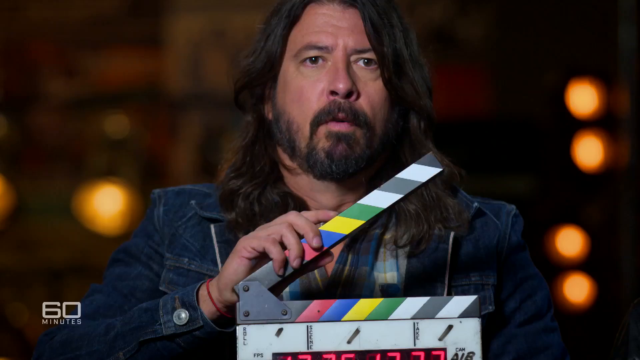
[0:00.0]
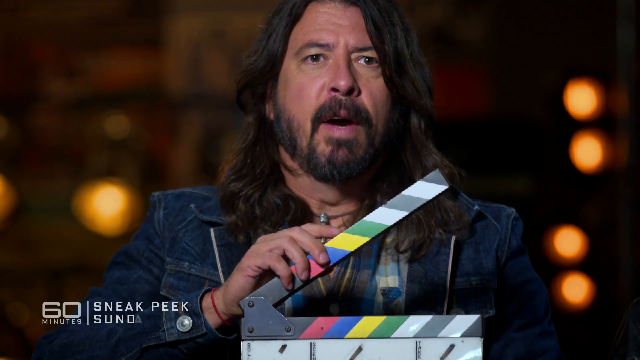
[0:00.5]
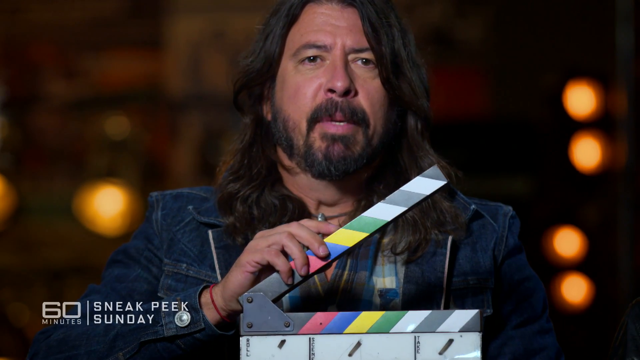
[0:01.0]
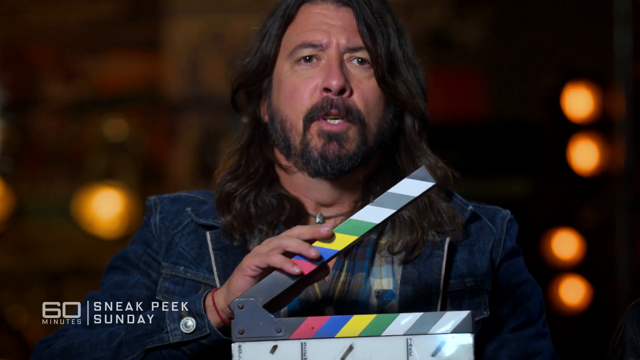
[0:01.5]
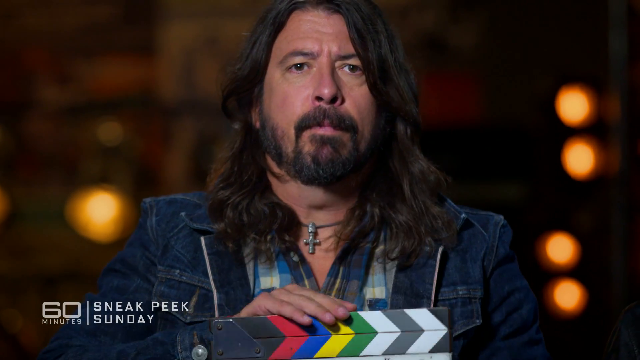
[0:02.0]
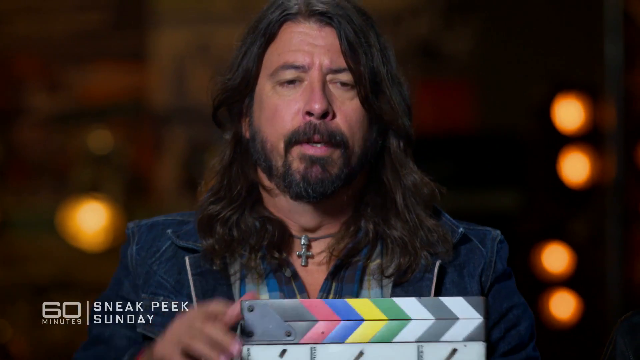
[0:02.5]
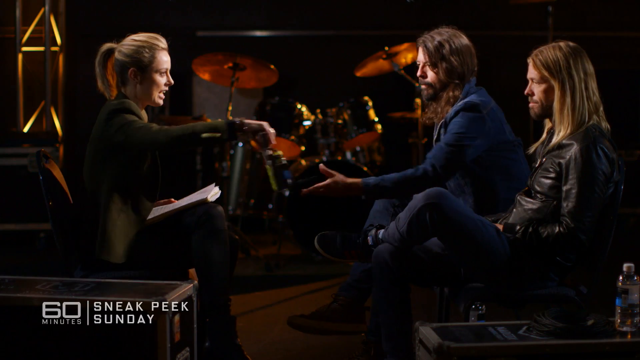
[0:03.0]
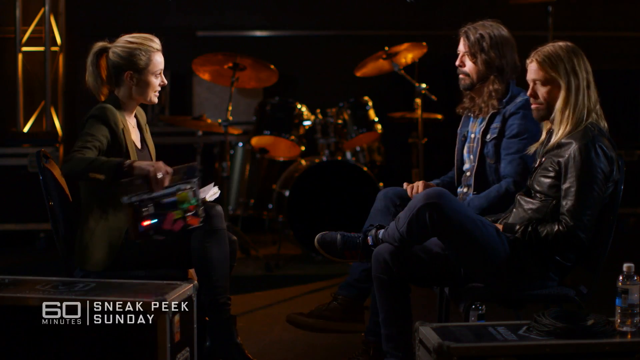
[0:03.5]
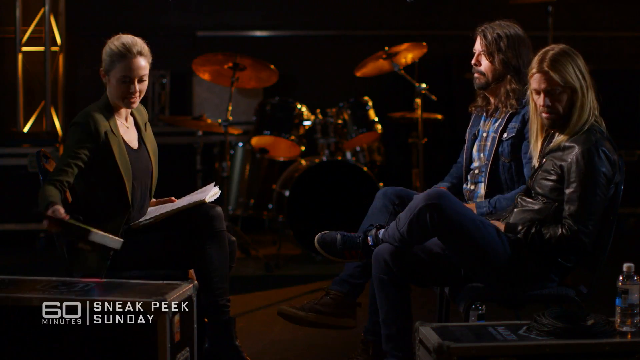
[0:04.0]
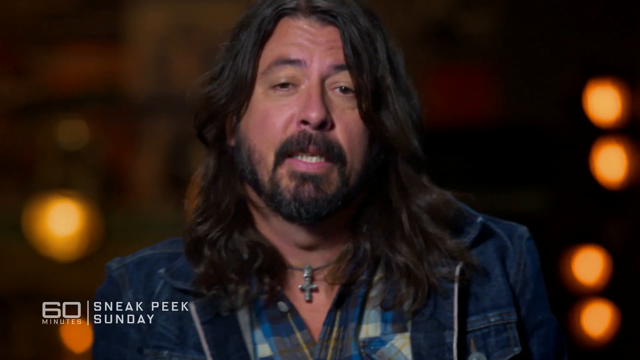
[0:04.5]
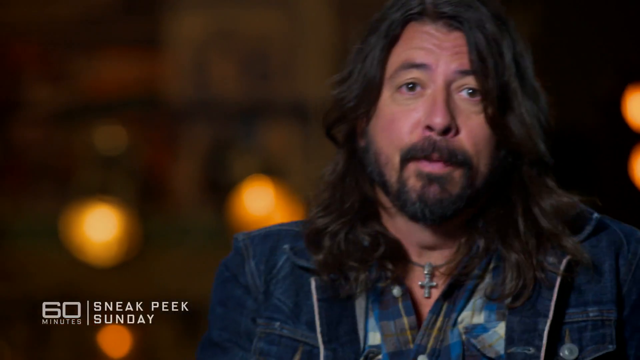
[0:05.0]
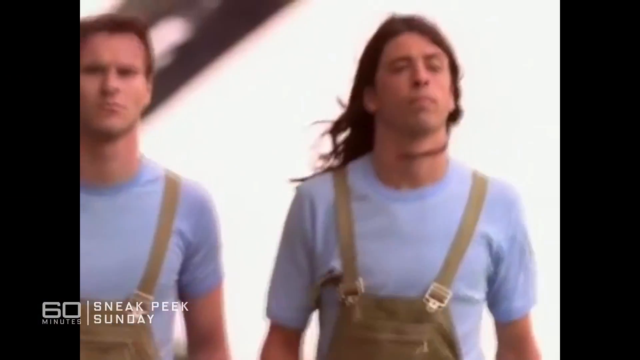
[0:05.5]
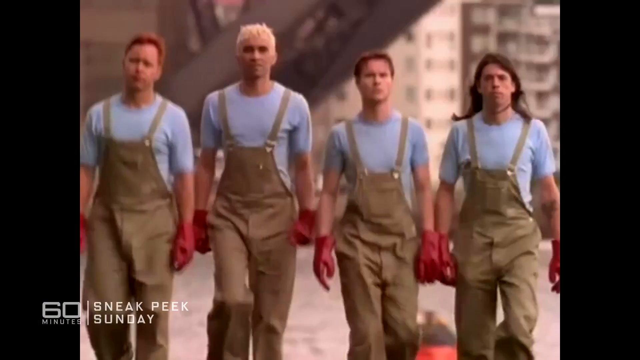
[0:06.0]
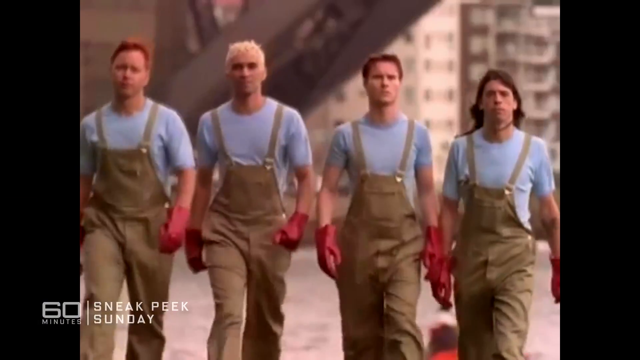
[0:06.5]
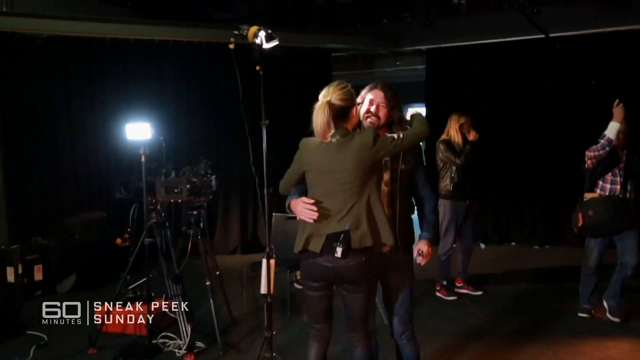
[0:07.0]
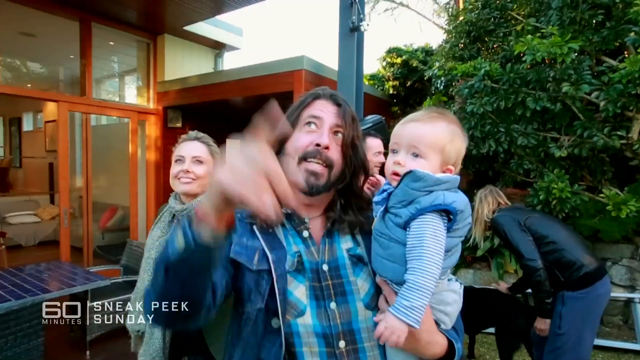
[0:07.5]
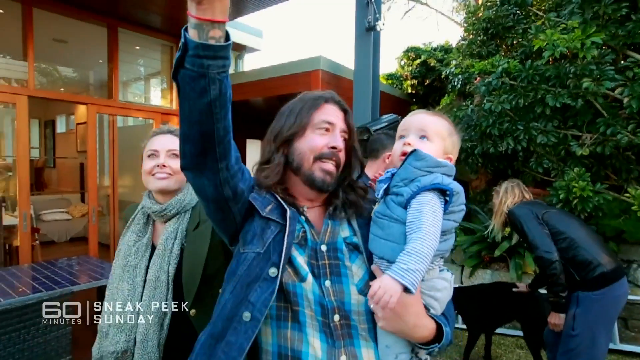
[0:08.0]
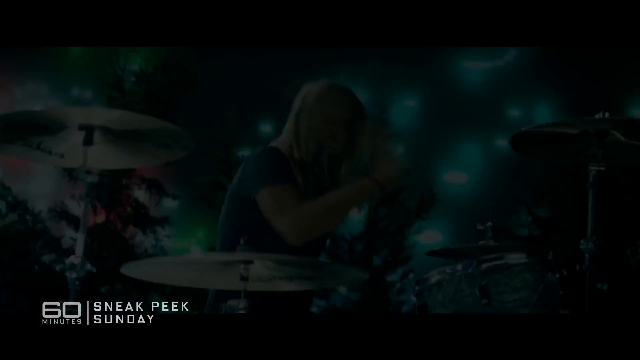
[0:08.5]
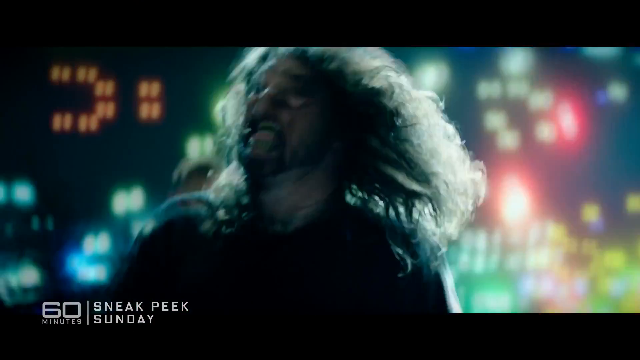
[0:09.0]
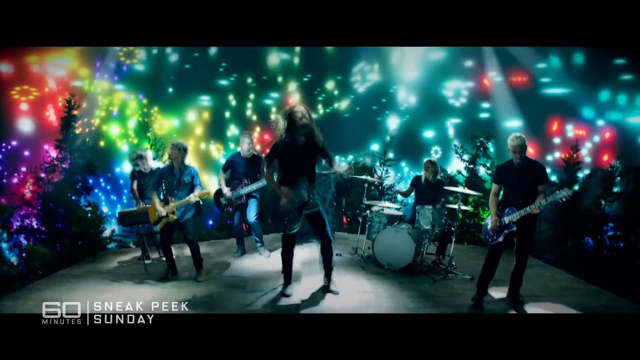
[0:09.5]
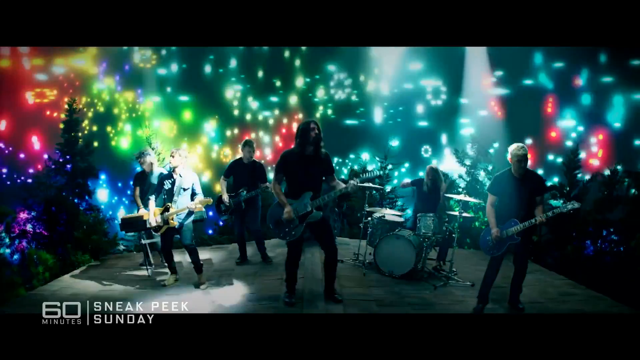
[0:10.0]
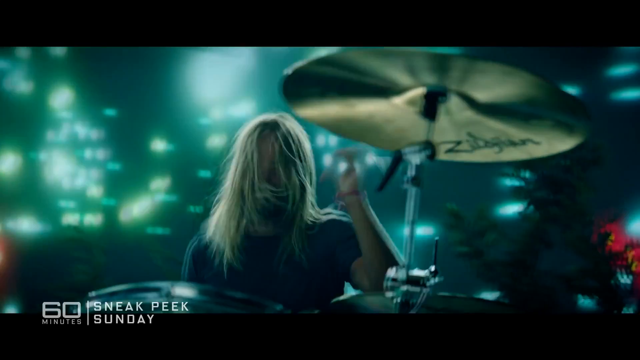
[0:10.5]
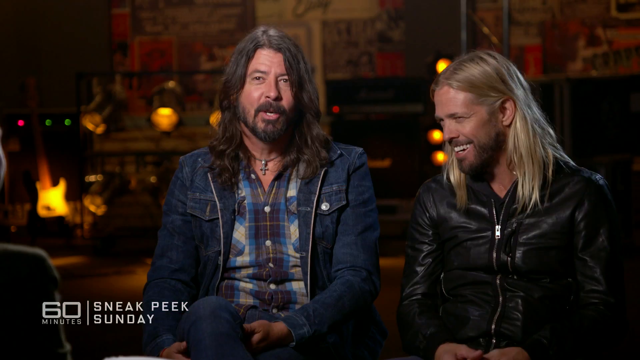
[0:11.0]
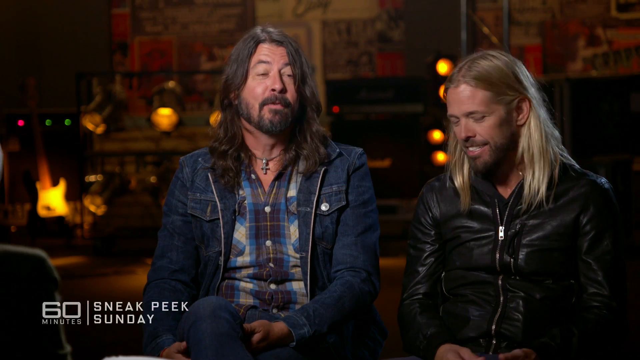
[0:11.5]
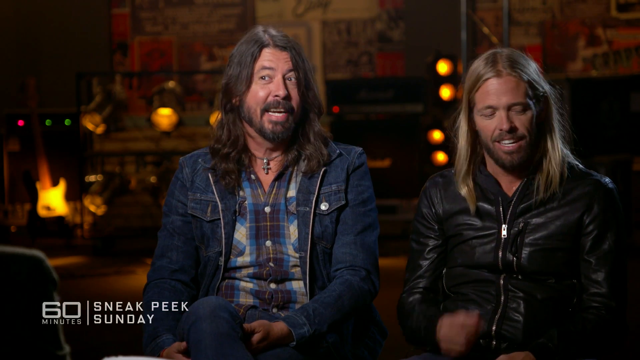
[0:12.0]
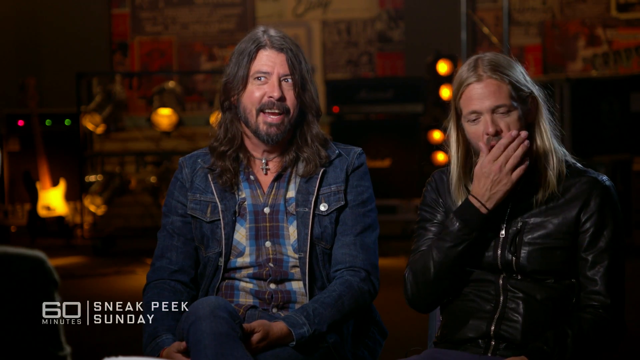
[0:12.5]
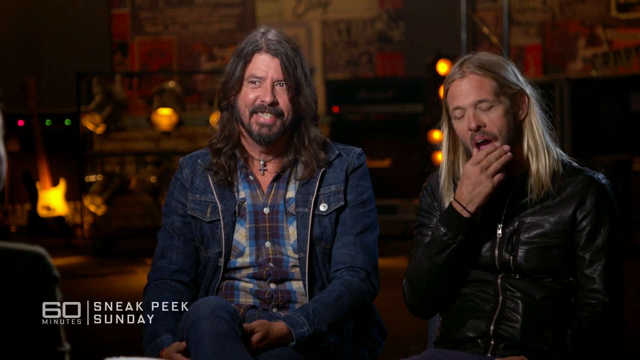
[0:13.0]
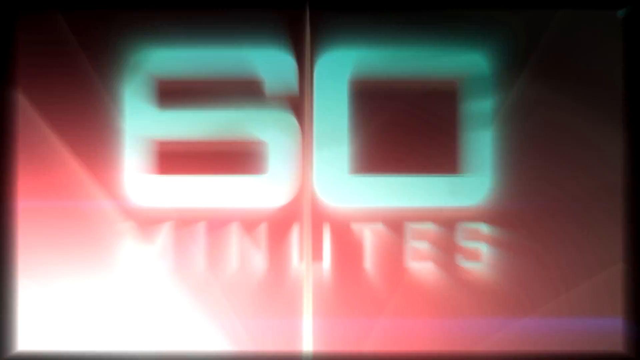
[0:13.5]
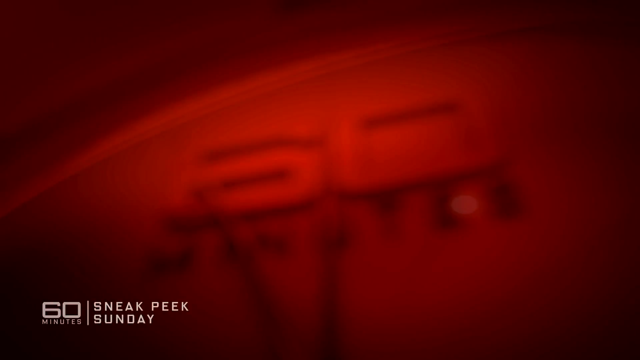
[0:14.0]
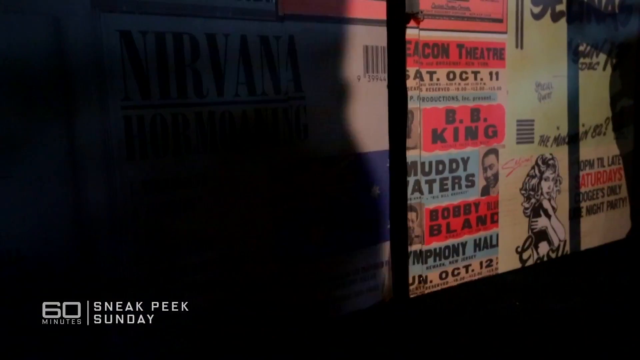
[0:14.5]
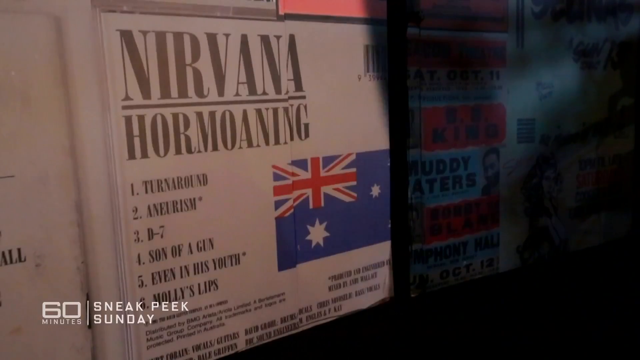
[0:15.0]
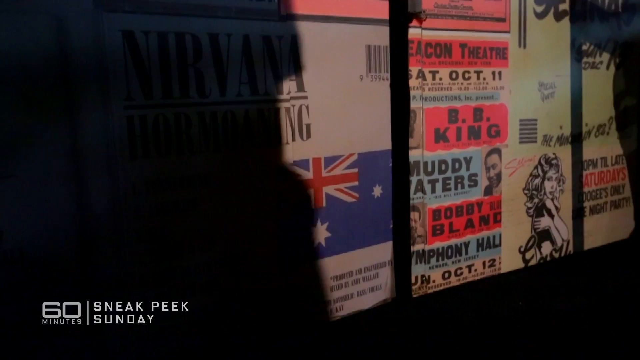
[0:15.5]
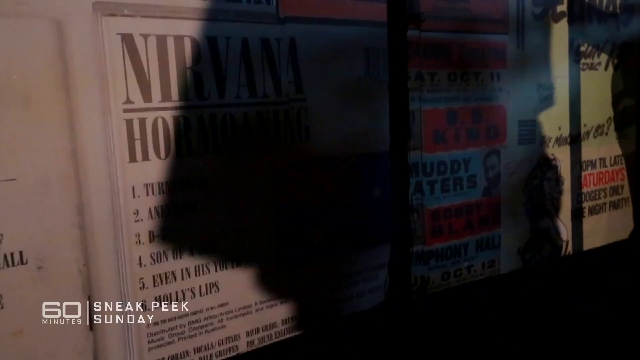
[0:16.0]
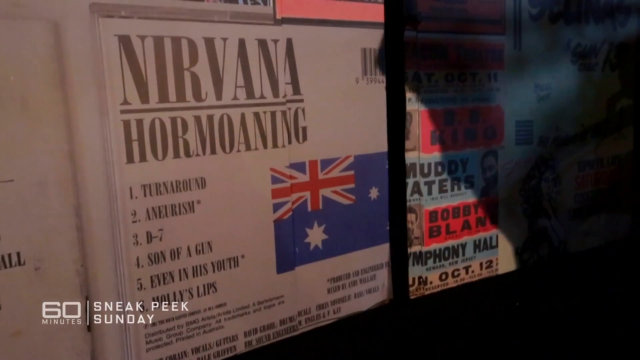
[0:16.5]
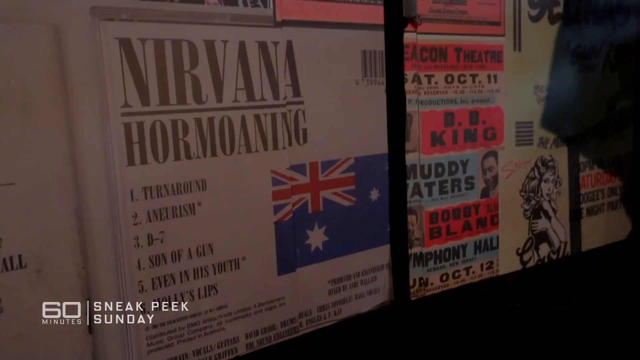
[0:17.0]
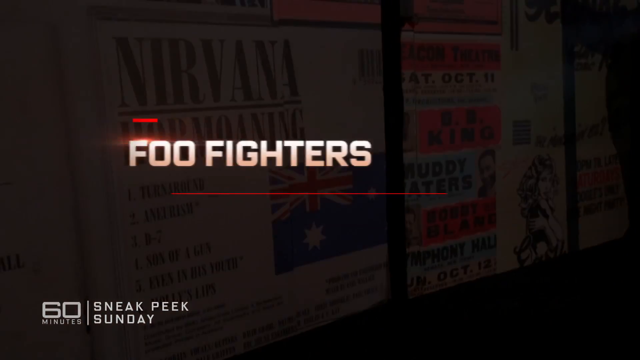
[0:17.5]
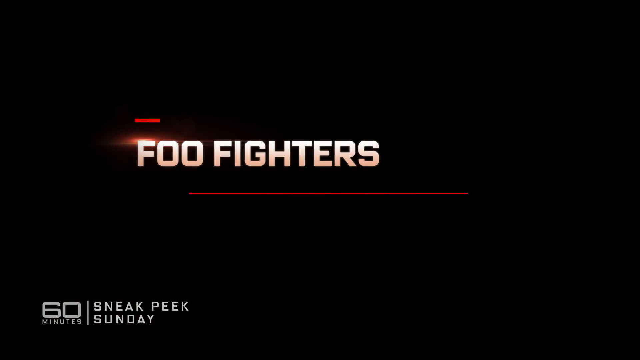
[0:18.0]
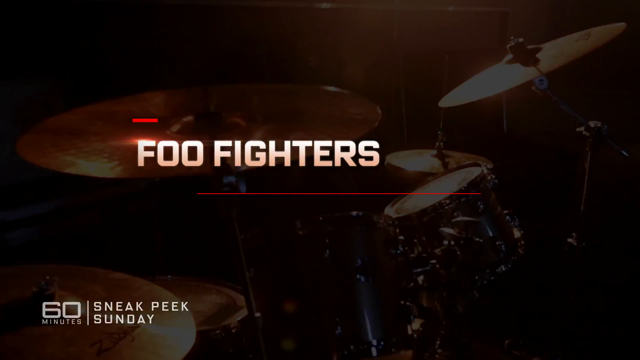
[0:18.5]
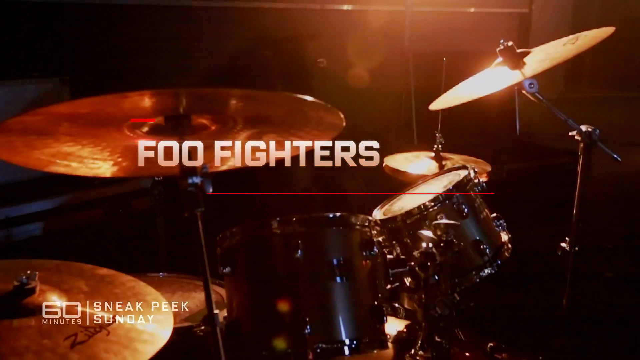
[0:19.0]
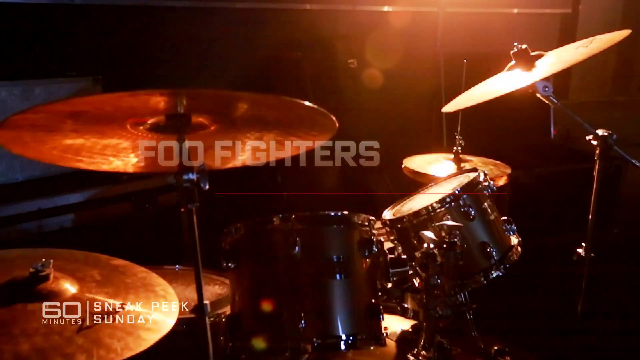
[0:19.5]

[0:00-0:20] A man with long hair wears a denim jacket and a brown, blue and white scotch shirt. He holds one of the boards used when shooting movies to signal a cut; the board is marked in several colours: blue, red, yellow, green and white. He appears to be talking about shooting the movie. The show is Sneak Peek Sunday. Later the man appears with another man and a woman, and it looks like they are being interviewed. Then four men appear, apparently working like models, wearing light brown dungarees, white shirts and red gloves. They look like a group of dancers or actors. Each has a different hair colour: one looks blonde, one is brown, one looks blackish, and the last has hair that looks red or maroon.